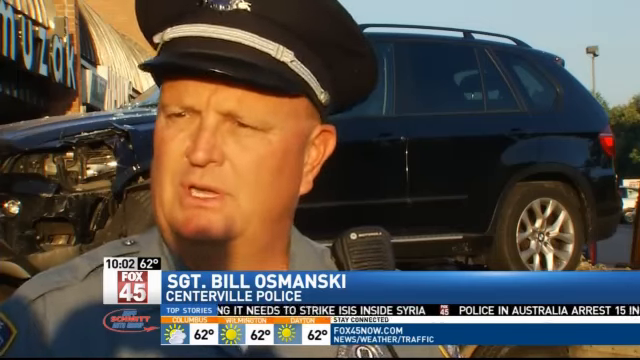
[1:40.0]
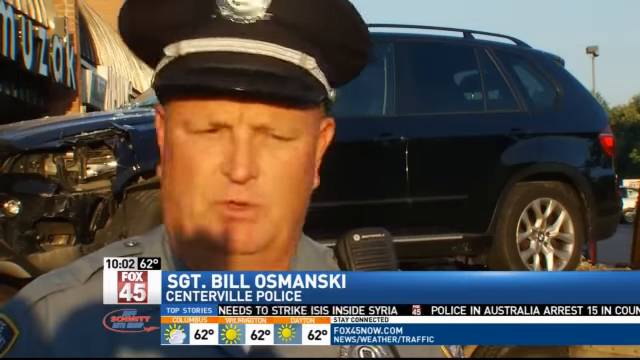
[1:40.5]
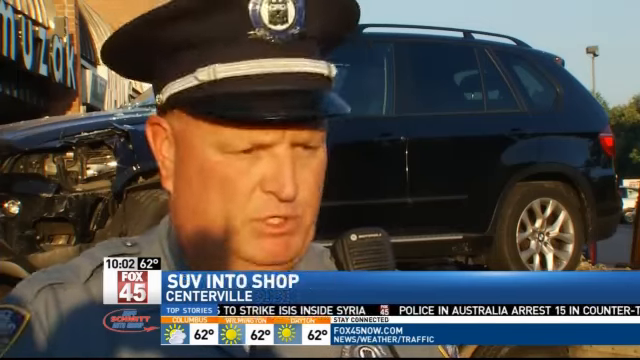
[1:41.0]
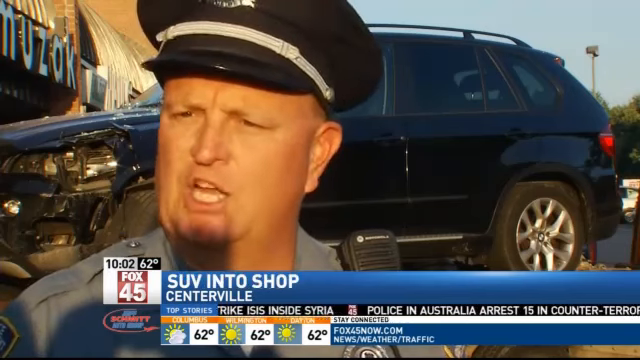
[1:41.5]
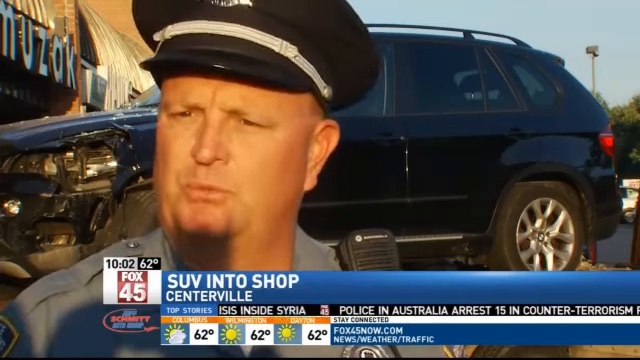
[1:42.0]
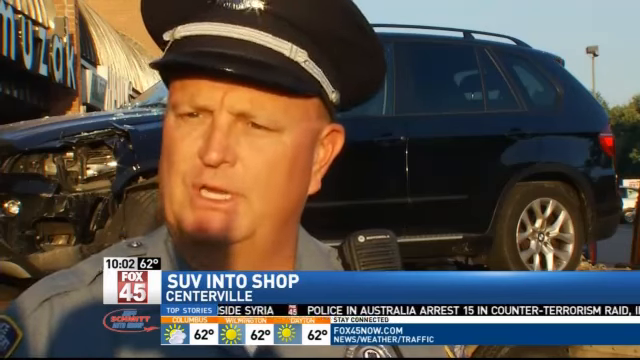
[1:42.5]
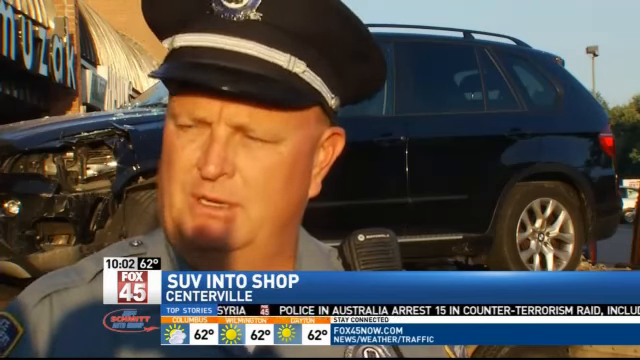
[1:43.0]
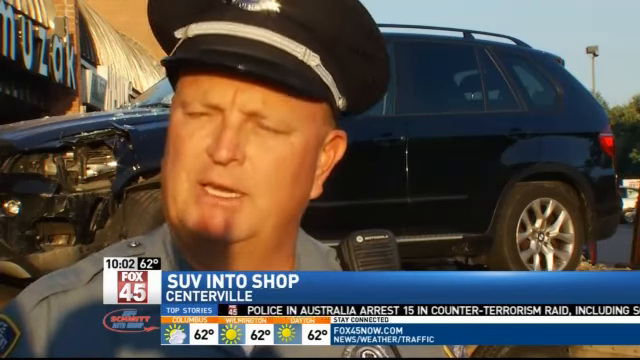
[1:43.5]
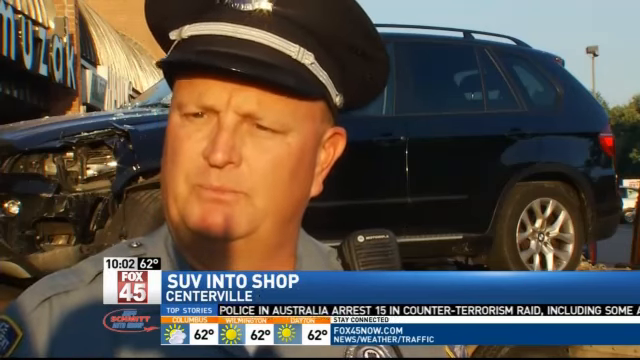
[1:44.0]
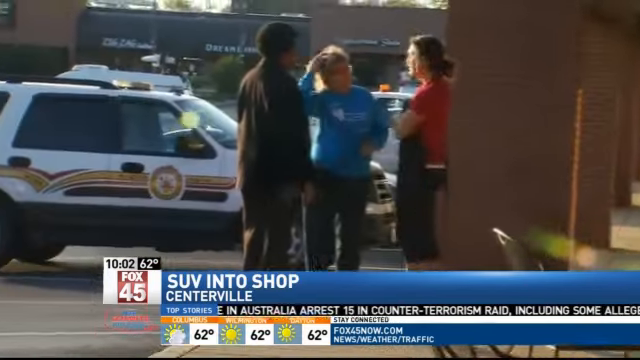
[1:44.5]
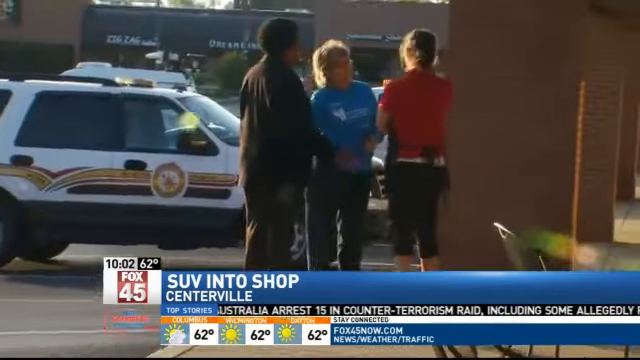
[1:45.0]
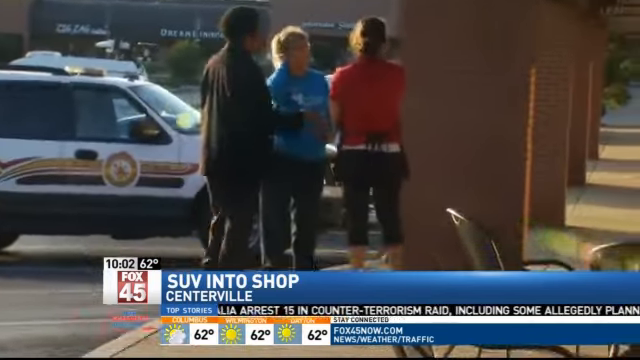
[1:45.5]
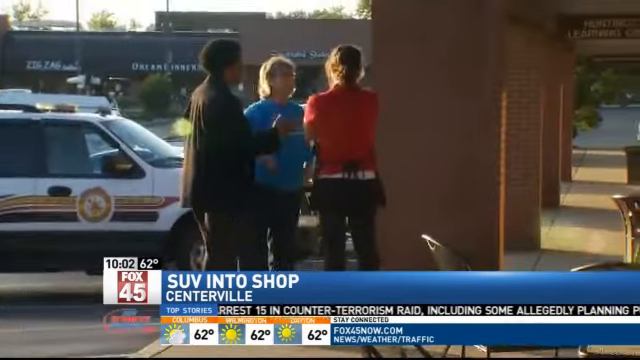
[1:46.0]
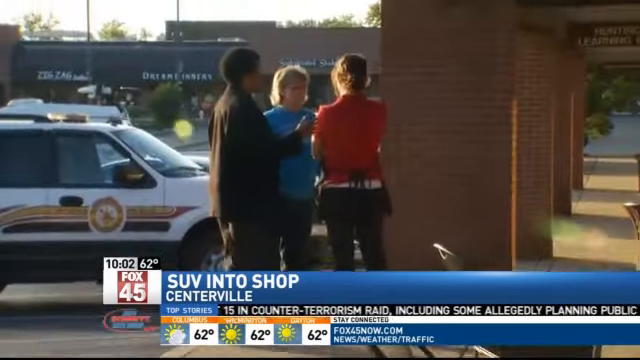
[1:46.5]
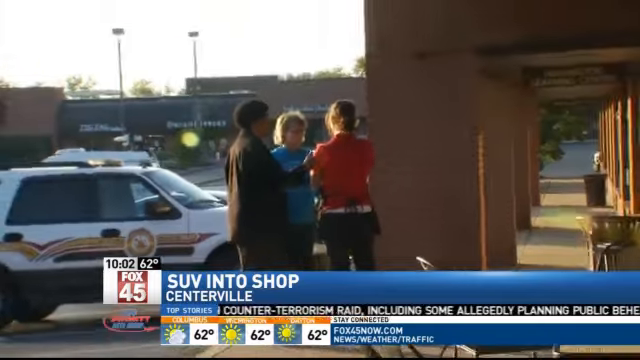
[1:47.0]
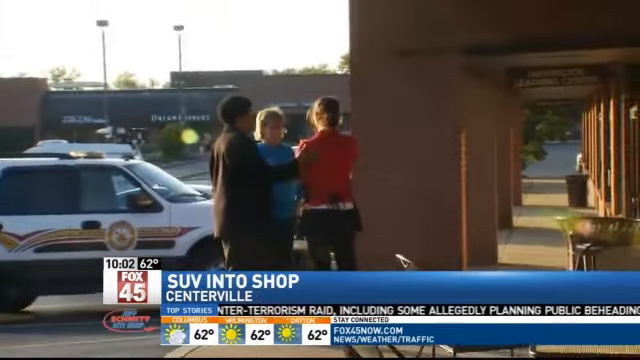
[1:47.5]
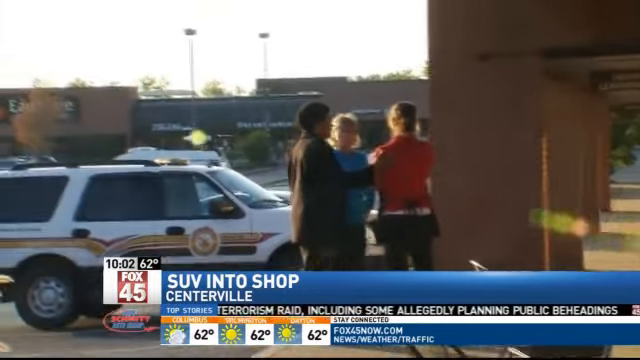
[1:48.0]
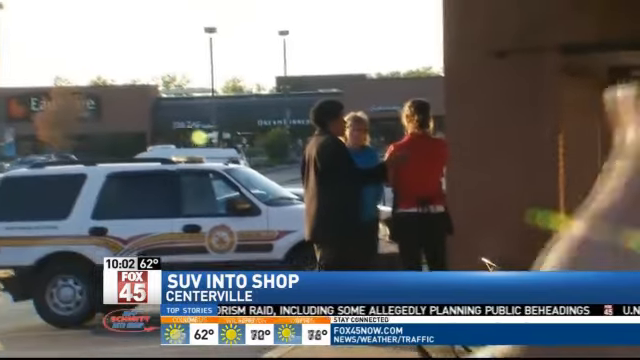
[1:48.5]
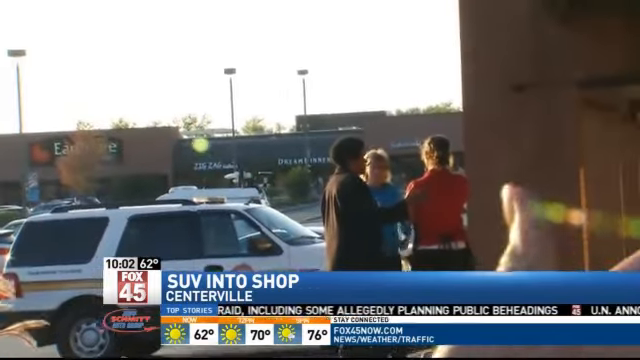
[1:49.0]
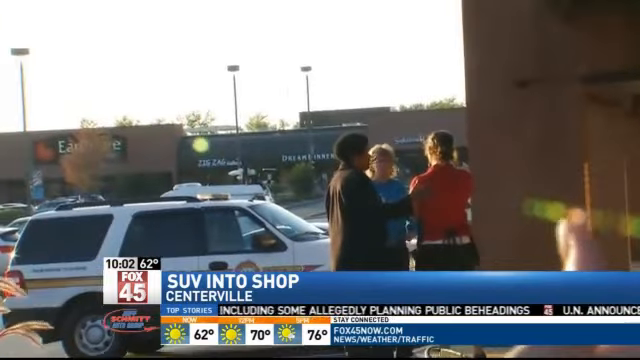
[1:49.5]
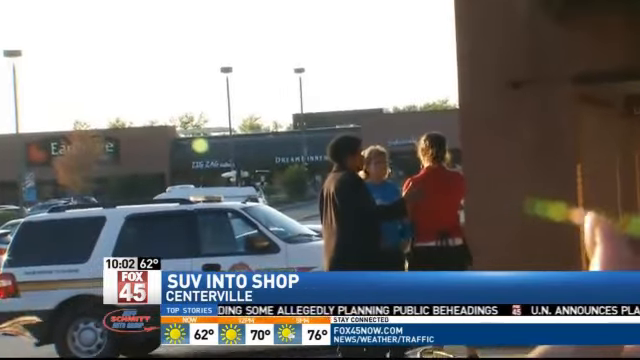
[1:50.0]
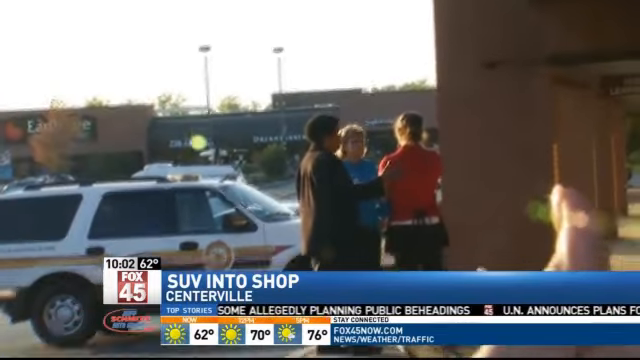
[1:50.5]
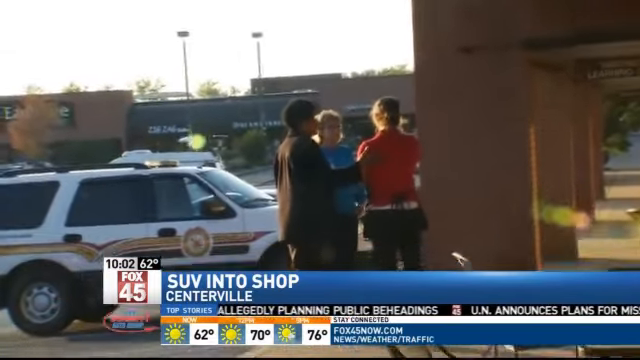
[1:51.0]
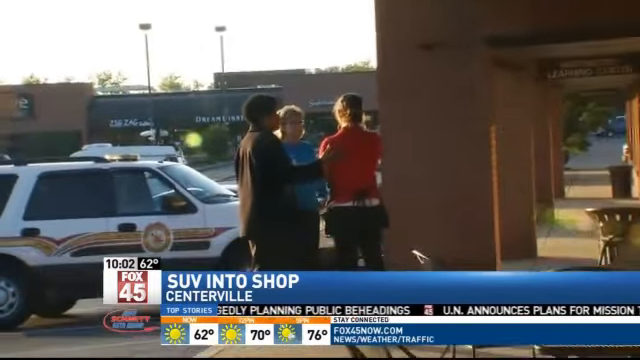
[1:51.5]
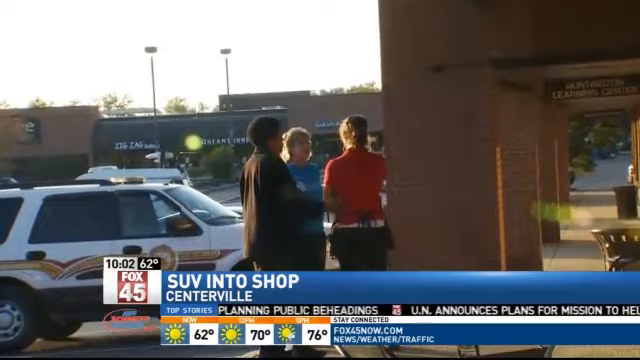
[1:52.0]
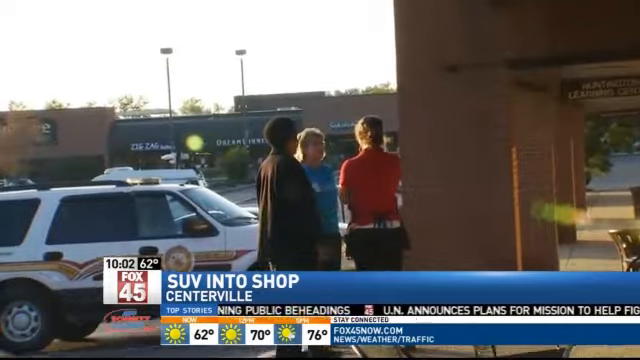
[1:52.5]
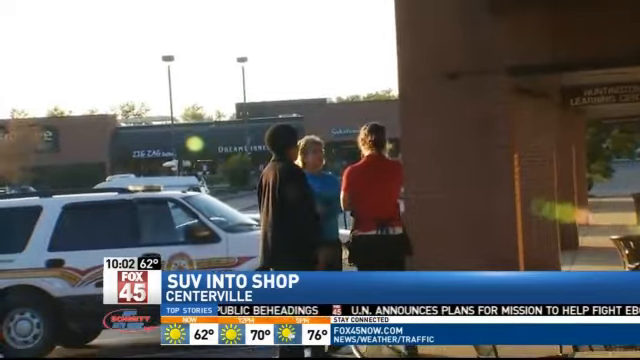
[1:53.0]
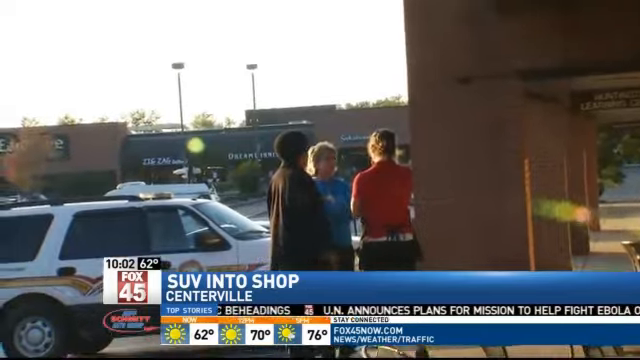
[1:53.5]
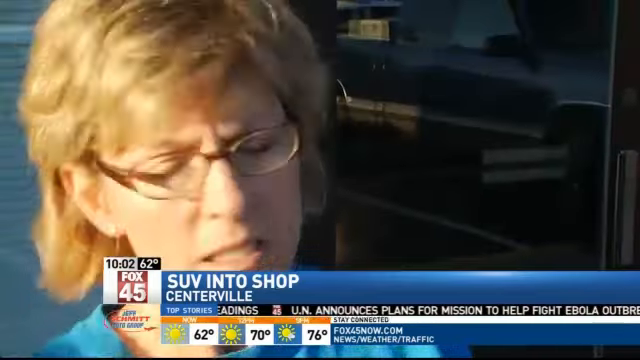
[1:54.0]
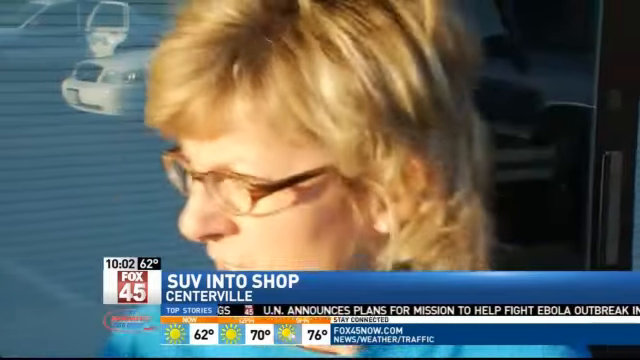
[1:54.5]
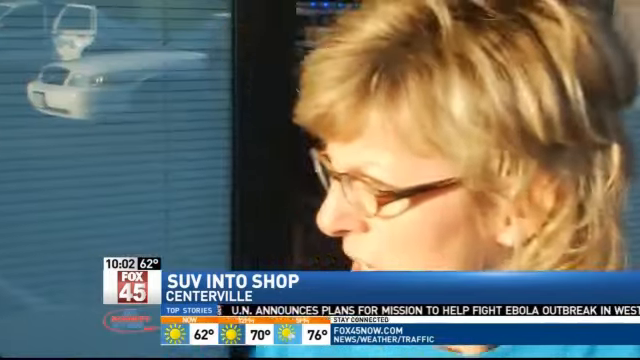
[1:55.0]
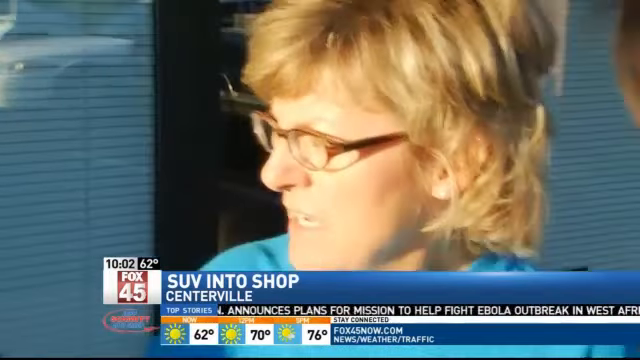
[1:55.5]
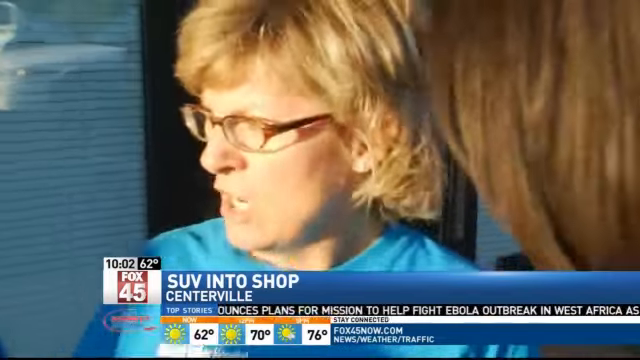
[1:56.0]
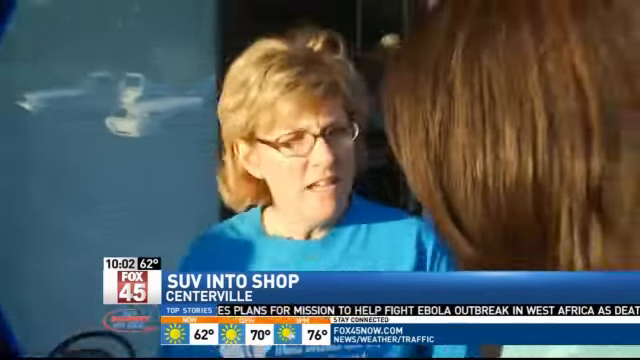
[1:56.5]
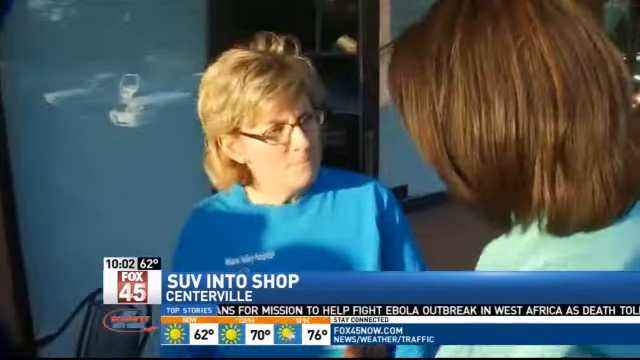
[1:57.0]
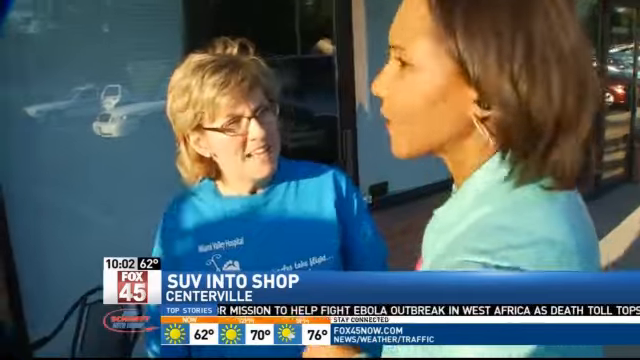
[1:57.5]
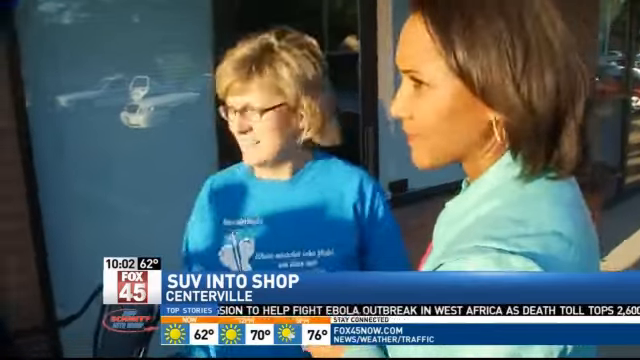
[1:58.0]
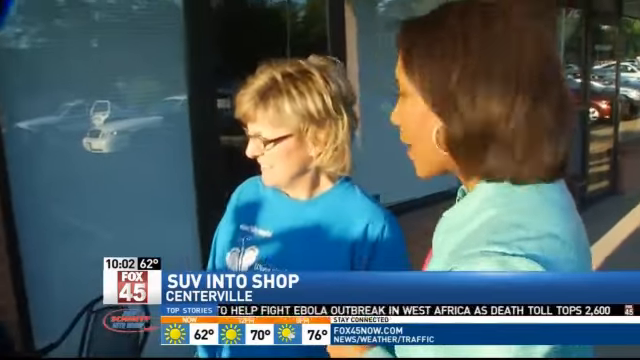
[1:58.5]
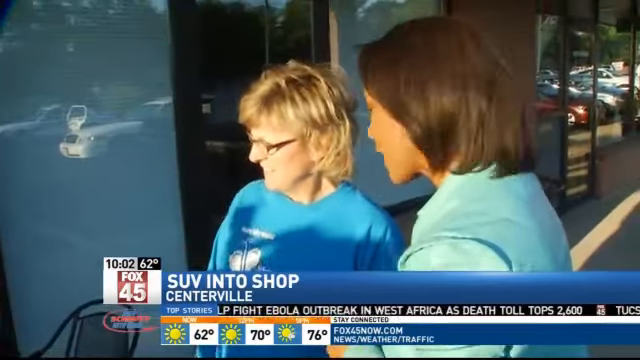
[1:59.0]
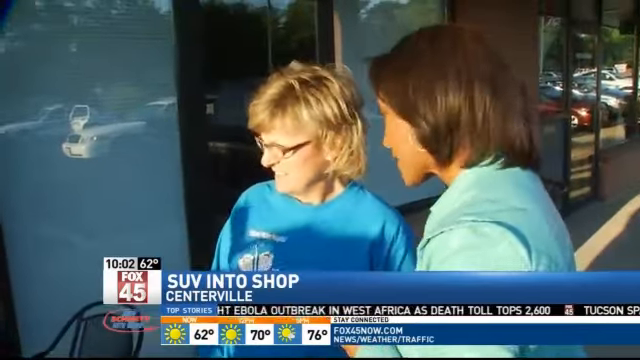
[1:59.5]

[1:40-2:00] The text "SUV into shop in Centerville" appears on a blue strip, in a report from Fox 45 showing 10:02 and 62 degrees. A police officer is being interviewed; he has a weird, jagged shadow on his chin that almost looks like a beard, but it is a shadow. The video cuts to three people talking outside: the bagel shop employee, her mom, and a black woman consoling her with her right hand on her left shoulder. The mom, wearing a t-shirt and glasses, is interviewed again by the person from Fox 45. At the bottom of the screen, white information scrolls in a brown strip, and underneath it are weather icons of half sun and half clouds, sun, and sun for three different times, with "62 degrees" shown. A man's left hand reaches up near the camera and then goes down. A yellow dot is on the store in the plaza directly behind the black woman in the brown coat who is talking, and a ray of sunshine comes from the right side out to the columns.